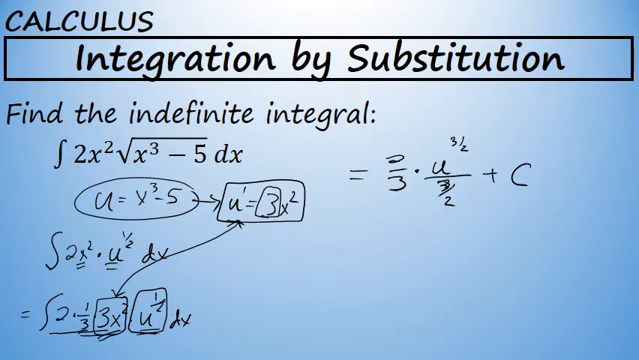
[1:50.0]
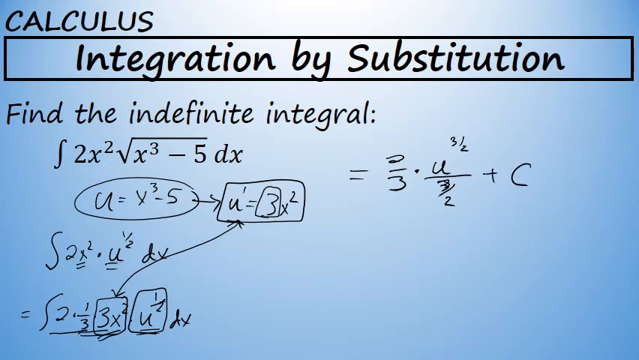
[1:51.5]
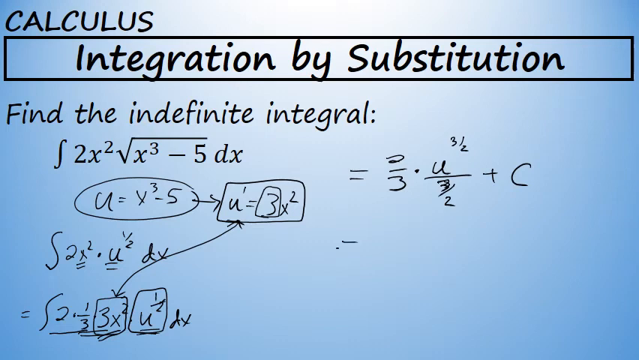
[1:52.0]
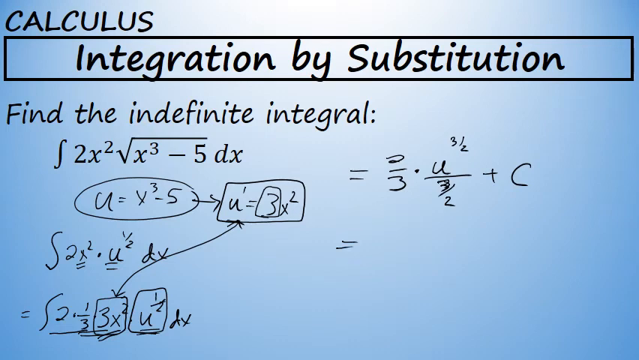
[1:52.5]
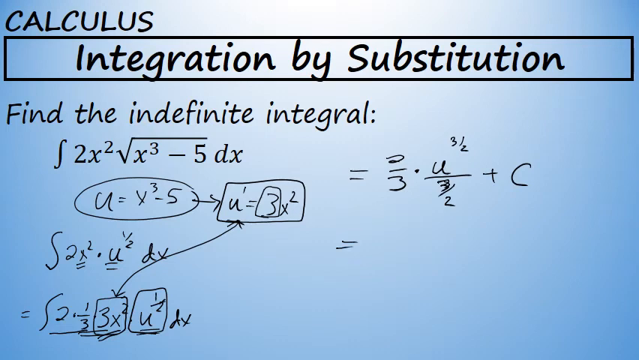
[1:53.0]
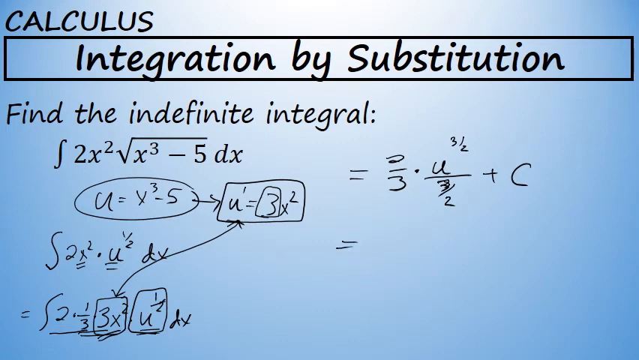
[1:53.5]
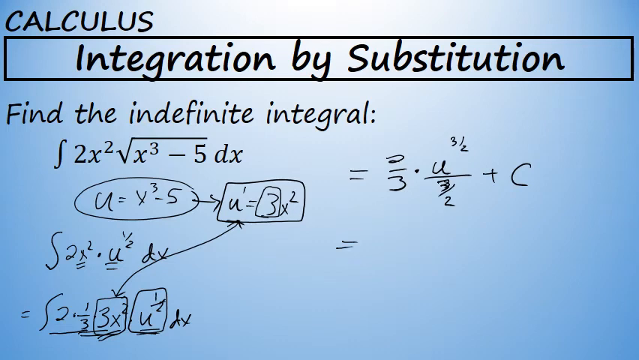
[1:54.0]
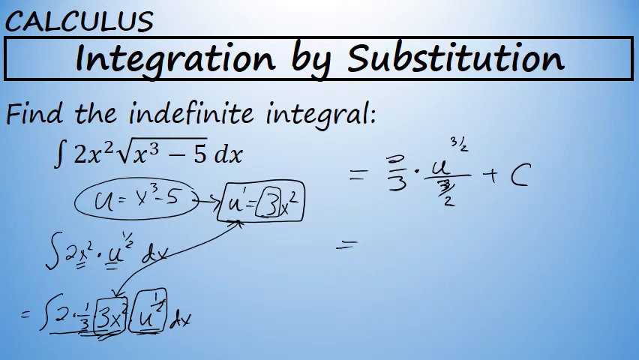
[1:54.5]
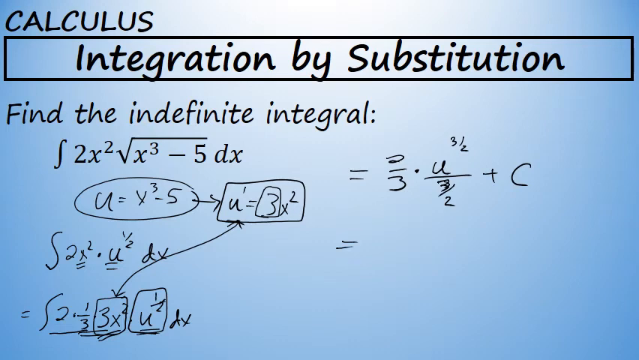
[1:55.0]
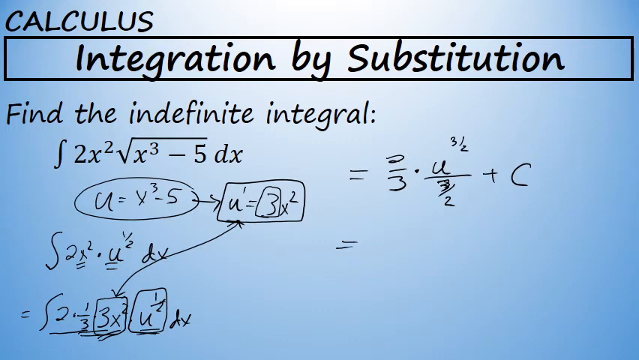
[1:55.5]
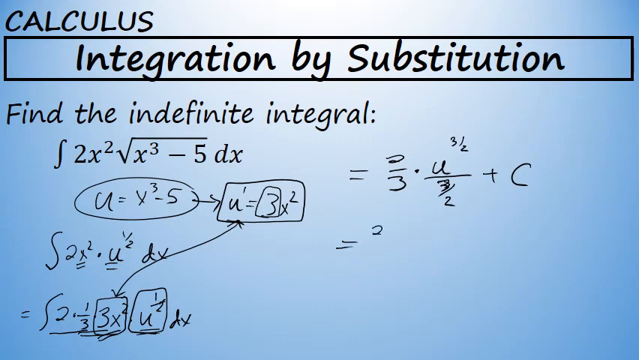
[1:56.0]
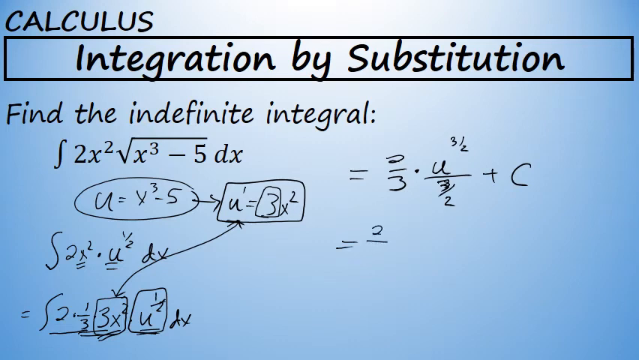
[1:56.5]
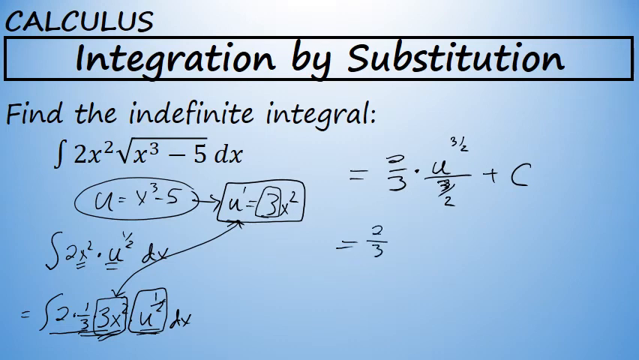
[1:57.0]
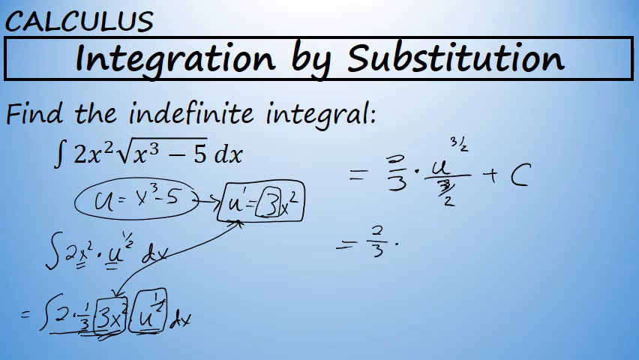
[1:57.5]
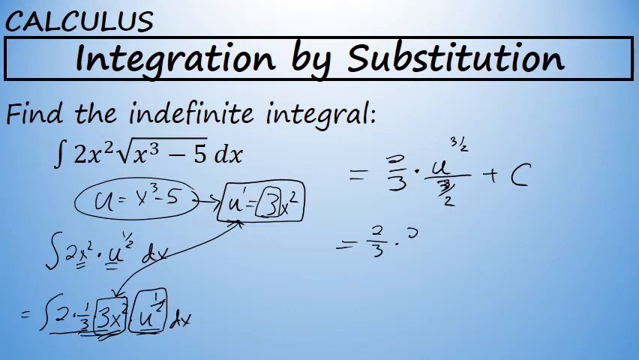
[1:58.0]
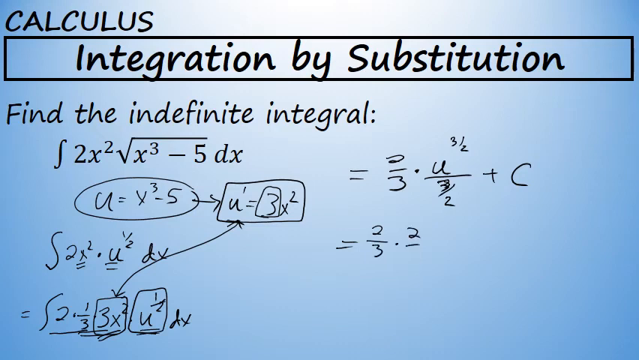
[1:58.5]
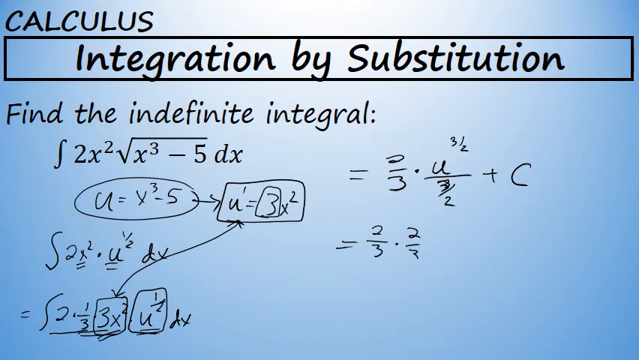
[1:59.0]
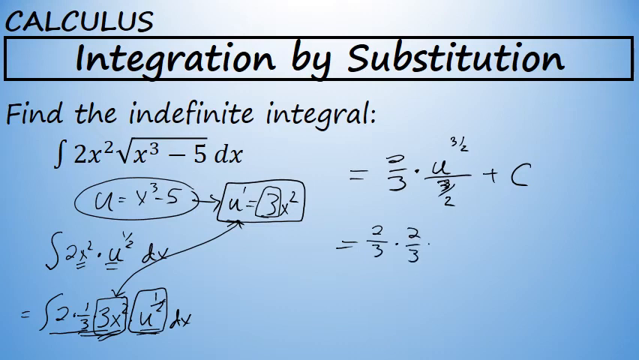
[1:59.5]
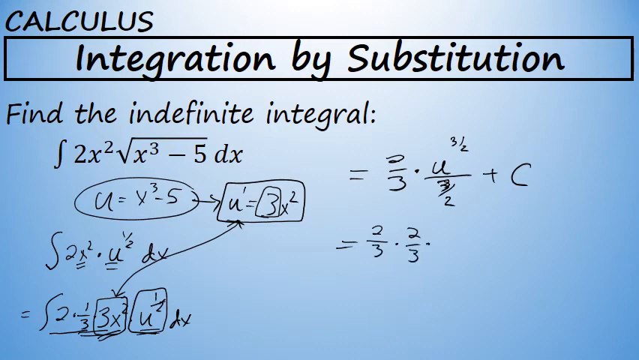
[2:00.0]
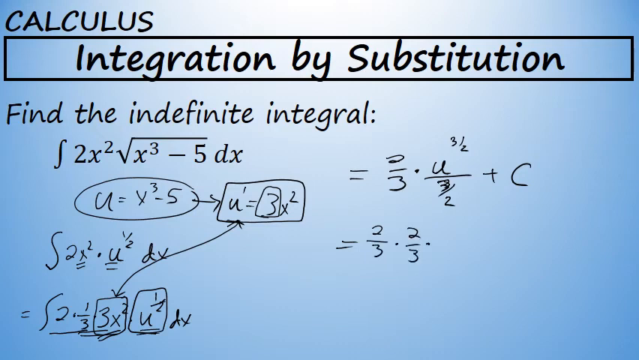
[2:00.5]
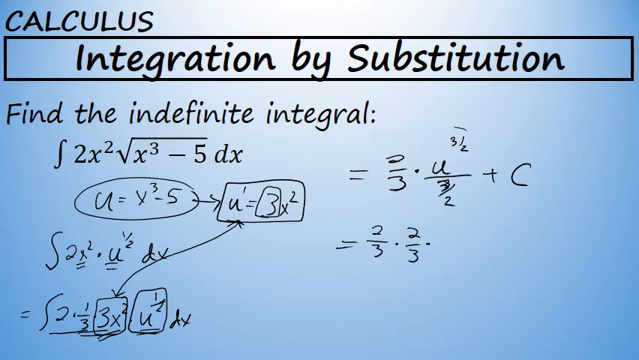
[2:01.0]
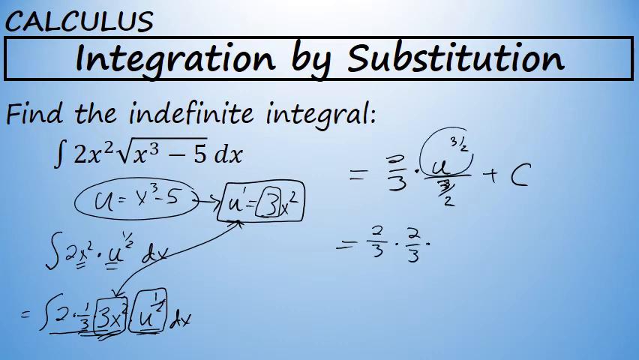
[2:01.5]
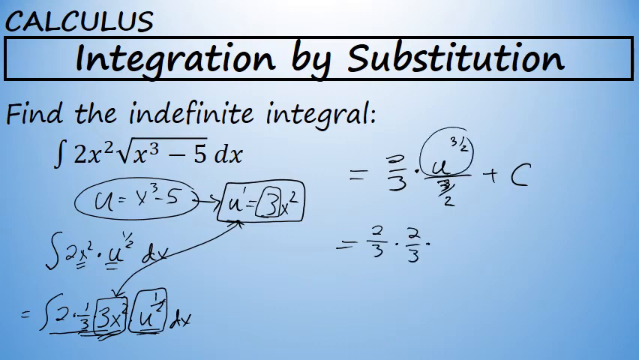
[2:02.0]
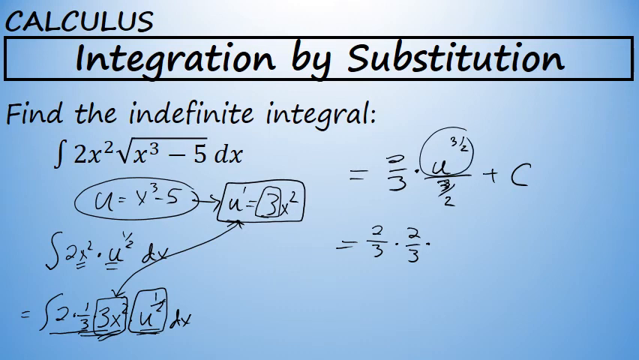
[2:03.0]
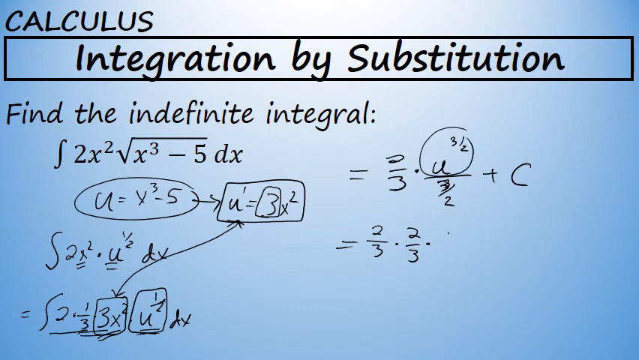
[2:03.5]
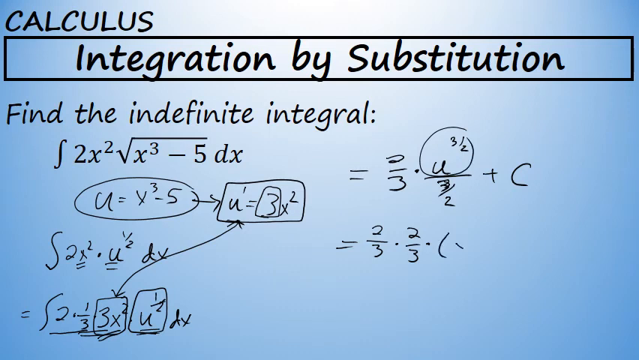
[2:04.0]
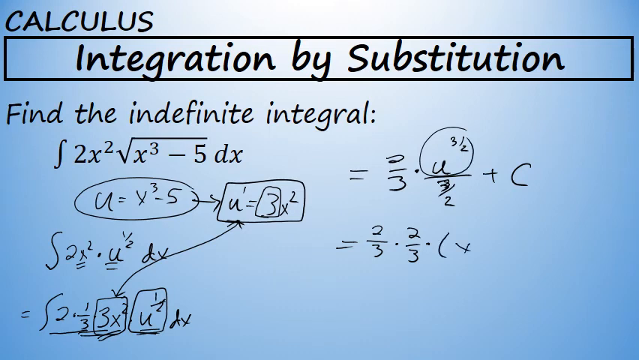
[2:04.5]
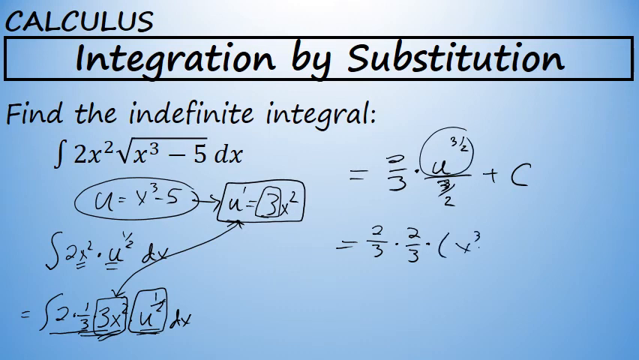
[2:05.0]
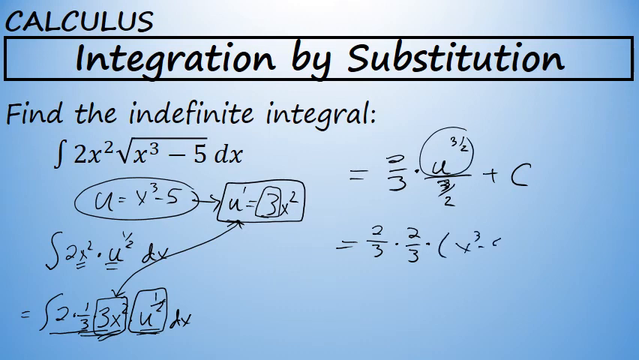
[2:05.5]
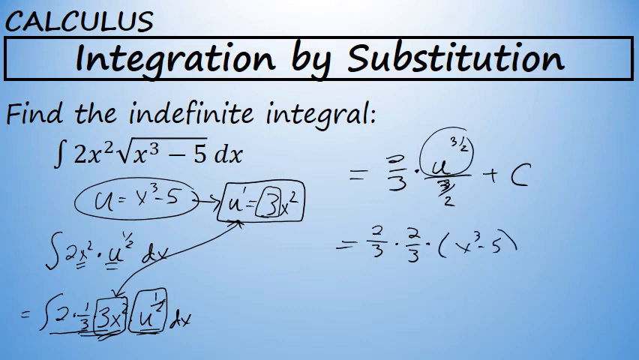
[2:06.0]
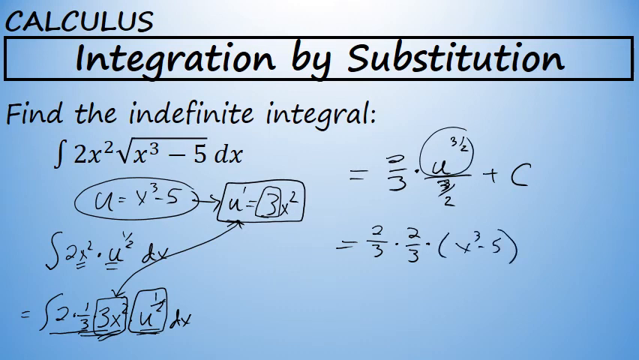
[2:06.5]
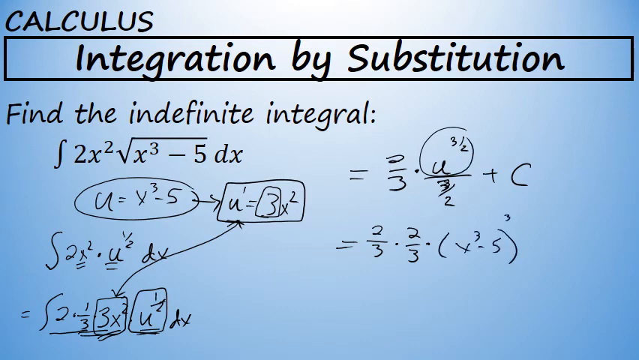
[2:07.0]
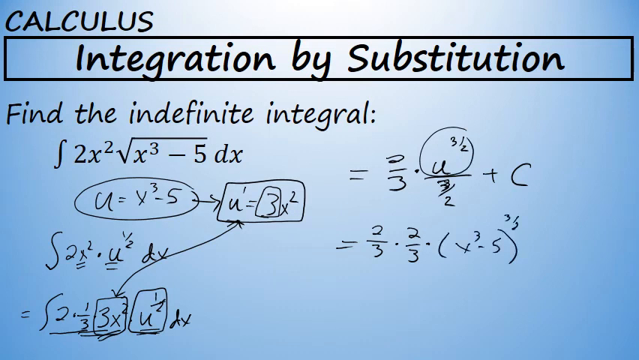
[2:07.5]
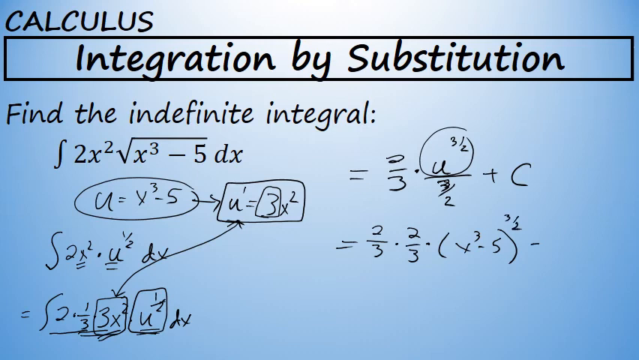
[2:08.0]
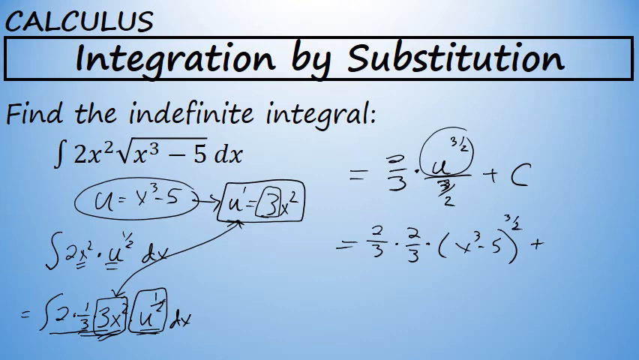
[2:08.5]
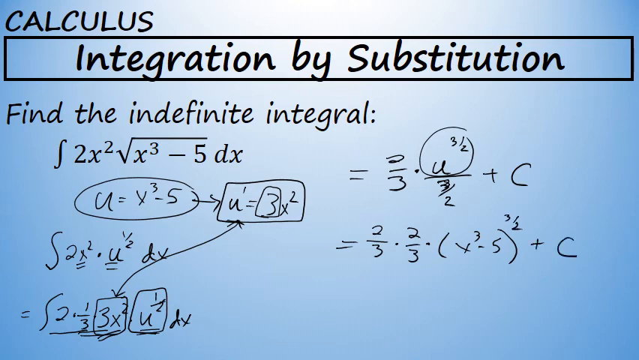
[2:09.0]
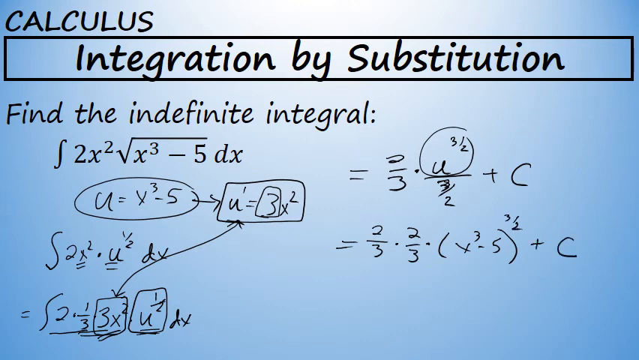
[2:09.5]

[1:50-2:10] The screen is blue, darker at the outside and lighter toward the middle. In the top left-hand corner the word "calculus" is written in black. Beneath it is a rectangle drawn with a black marker, containing "integration by substitution" in black, and below it "find the indefinite integral". Under that is 2x superscript 2, long division sign, x superscript 3 minus 5 dx. Underneath, someone has written u equals x superscript 3 minus 5, with a circle around it and an arrow pointing right to u equals 3x superscript 2. Below that is 2x superscript 2 decimal u half dx, and under it 2 decimal one third 3x superscript 2 u half dx, with an arrow drawn from that 3x superscript 2 to the 3x superscript 2 in the equation above it. To the right of these equations someone writes equals two thirds decimal u 3/2 plus c, and under that equals two thirds decimal two thirds decimal, then in parentheses x superscript 3 minus 5, followed by 3/2.